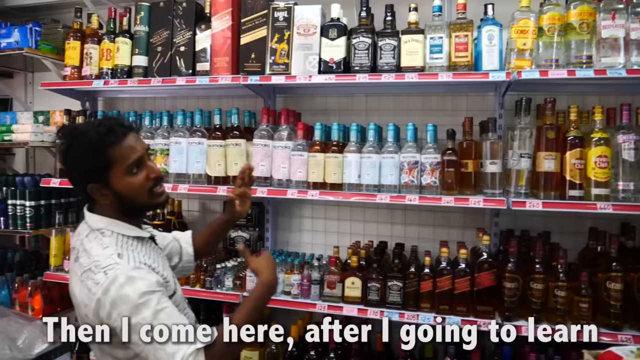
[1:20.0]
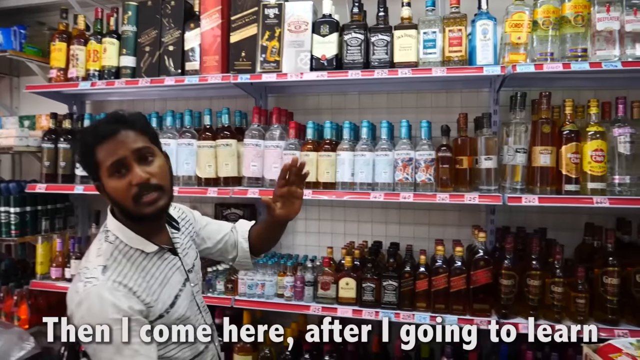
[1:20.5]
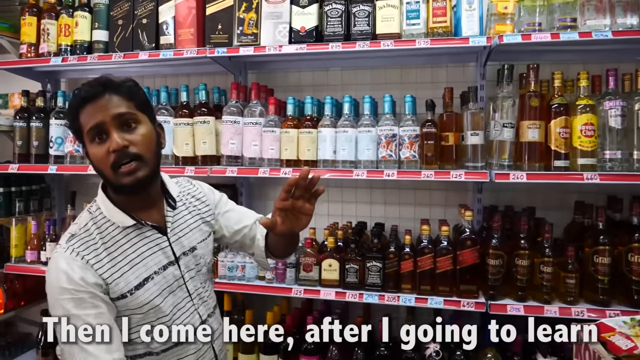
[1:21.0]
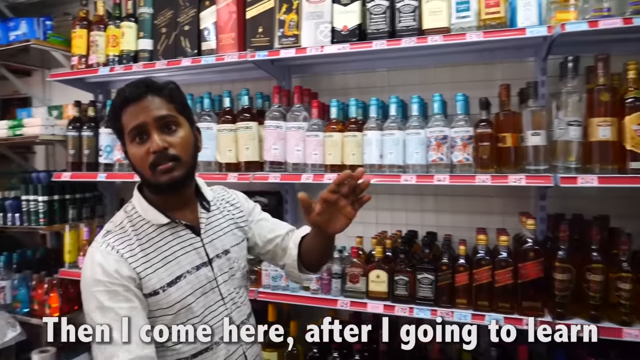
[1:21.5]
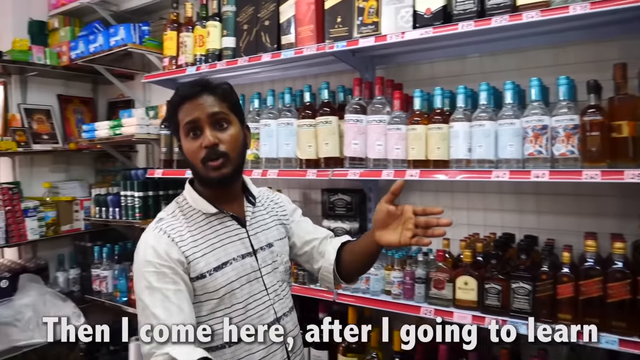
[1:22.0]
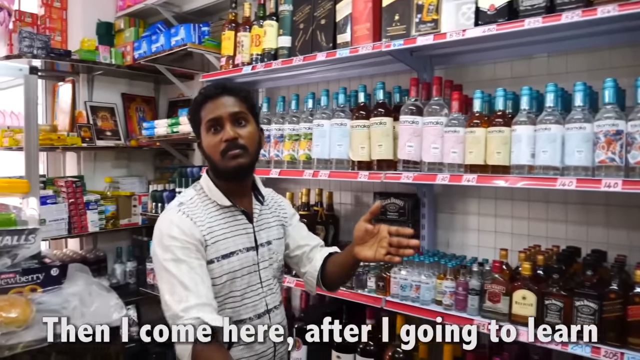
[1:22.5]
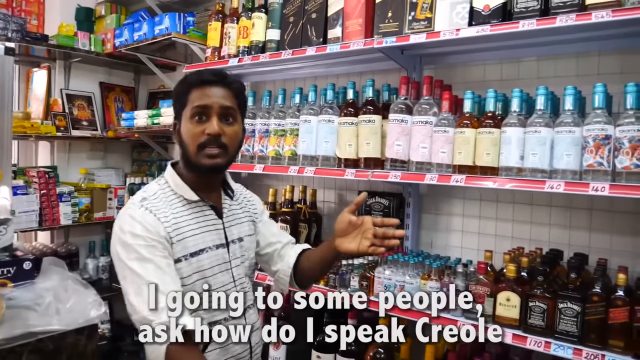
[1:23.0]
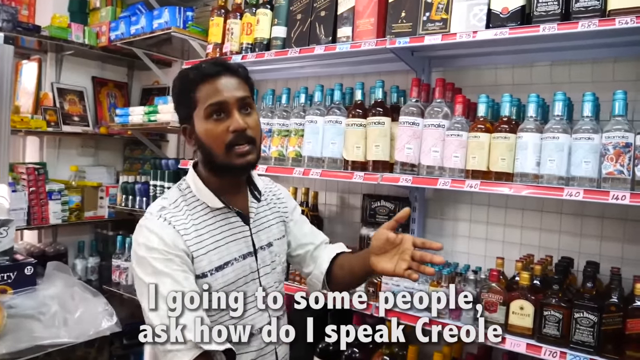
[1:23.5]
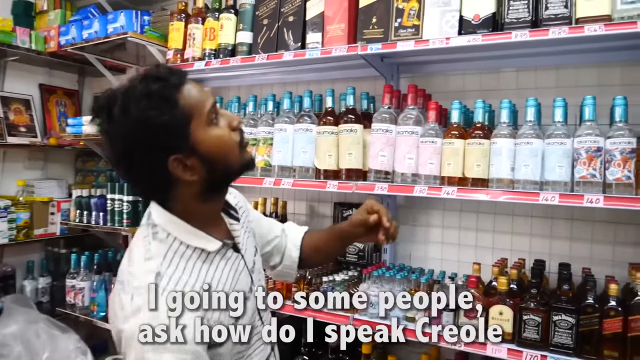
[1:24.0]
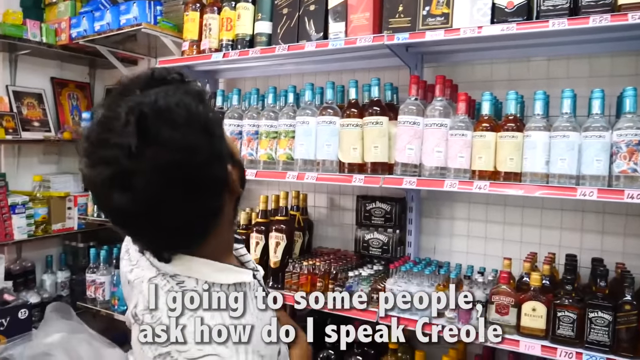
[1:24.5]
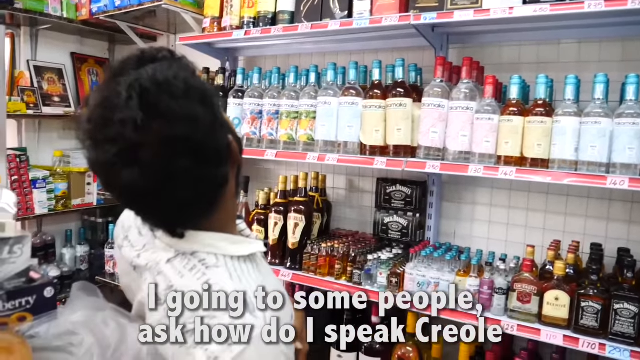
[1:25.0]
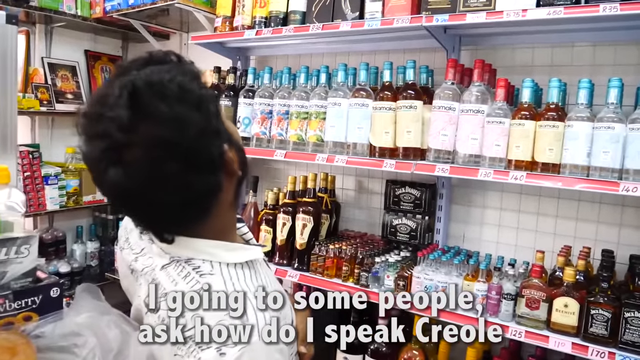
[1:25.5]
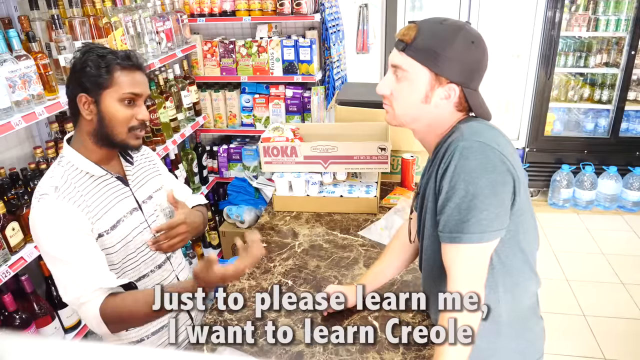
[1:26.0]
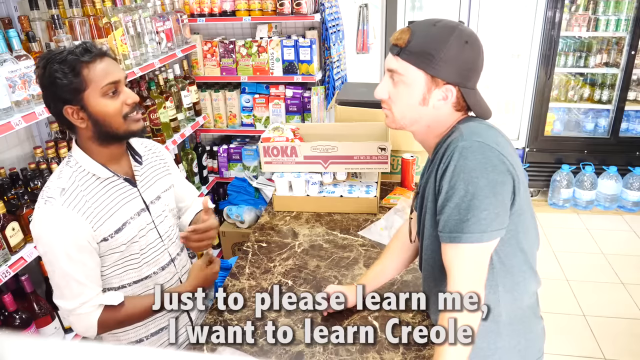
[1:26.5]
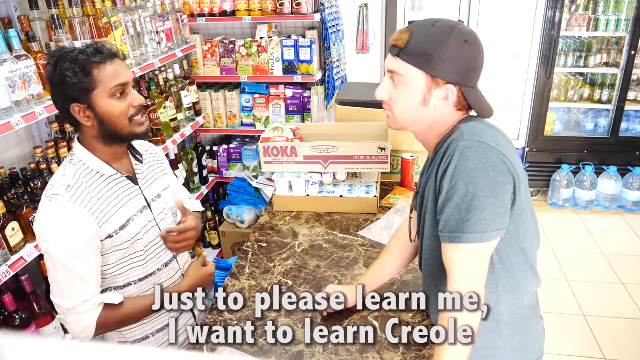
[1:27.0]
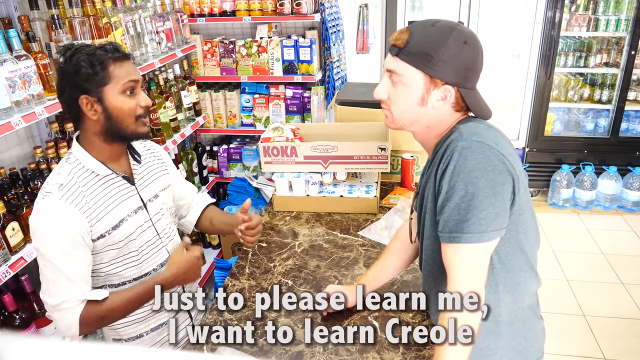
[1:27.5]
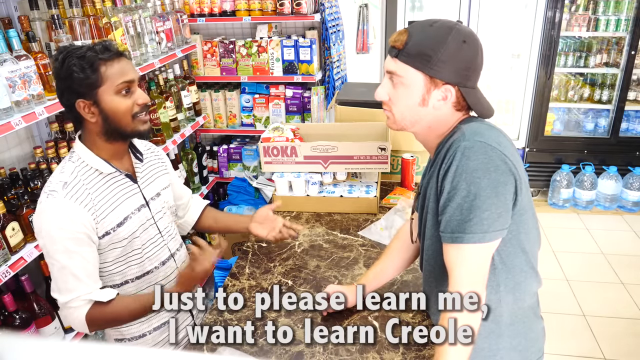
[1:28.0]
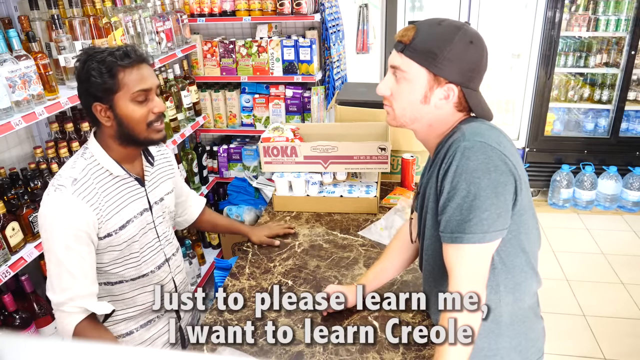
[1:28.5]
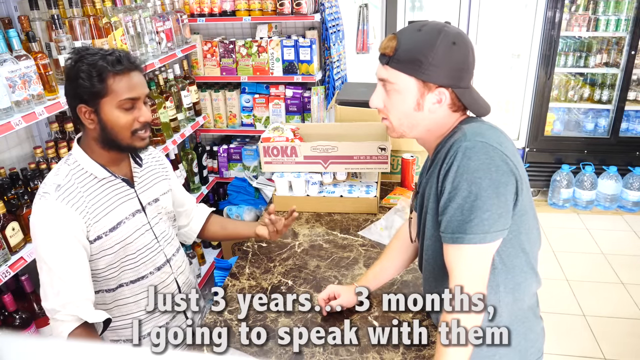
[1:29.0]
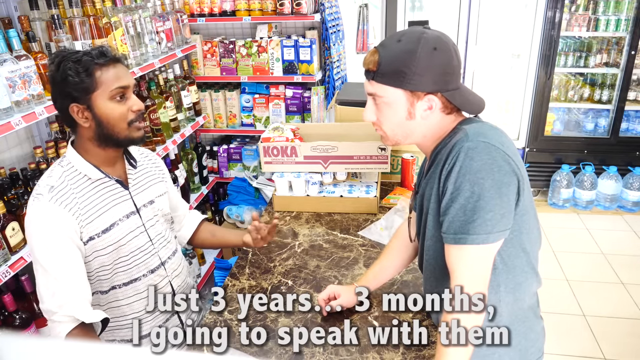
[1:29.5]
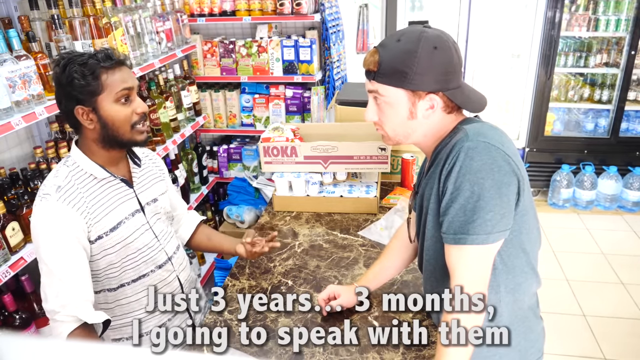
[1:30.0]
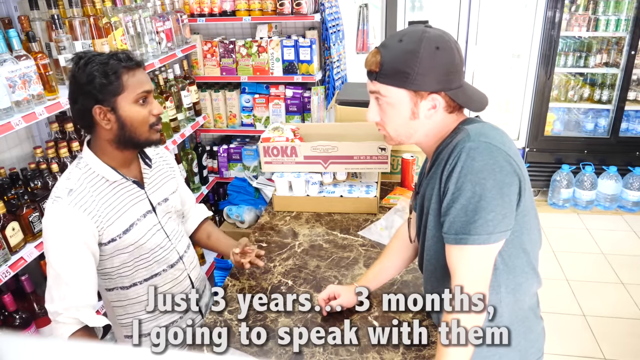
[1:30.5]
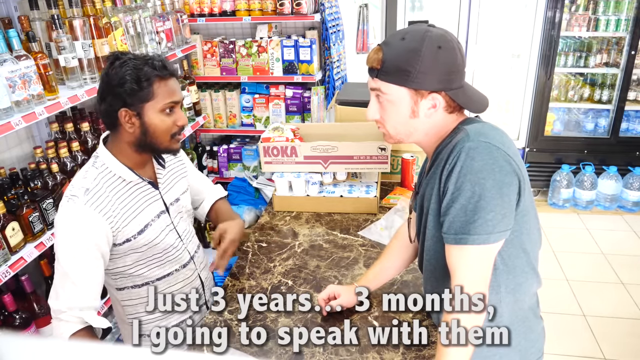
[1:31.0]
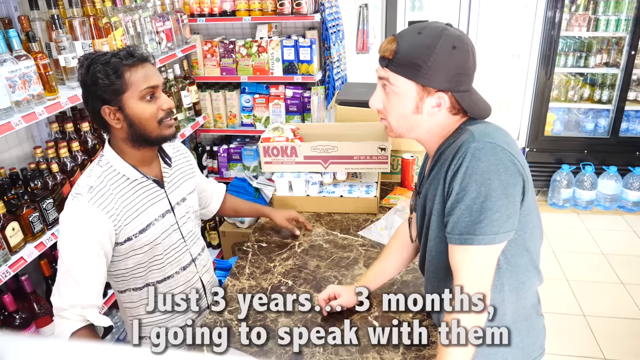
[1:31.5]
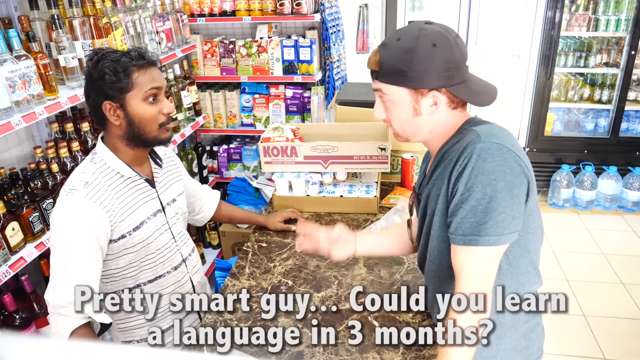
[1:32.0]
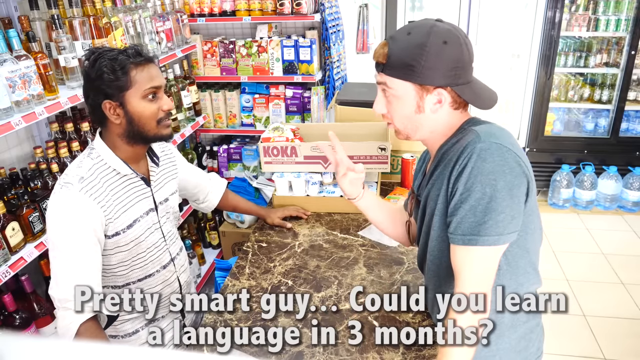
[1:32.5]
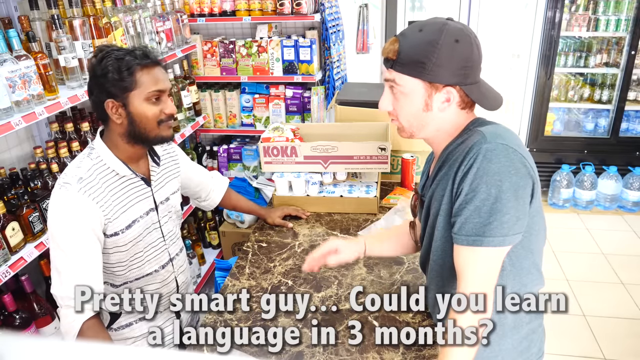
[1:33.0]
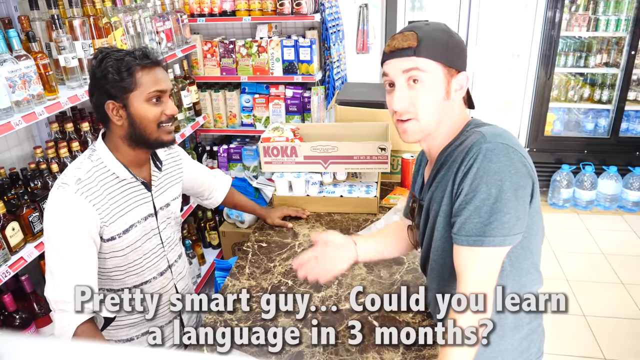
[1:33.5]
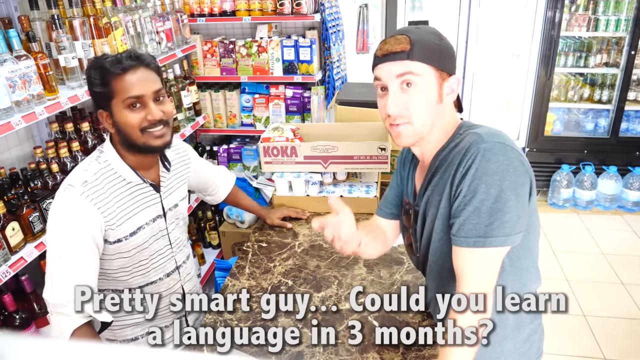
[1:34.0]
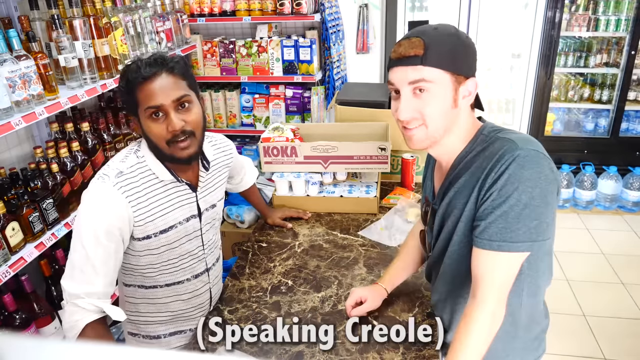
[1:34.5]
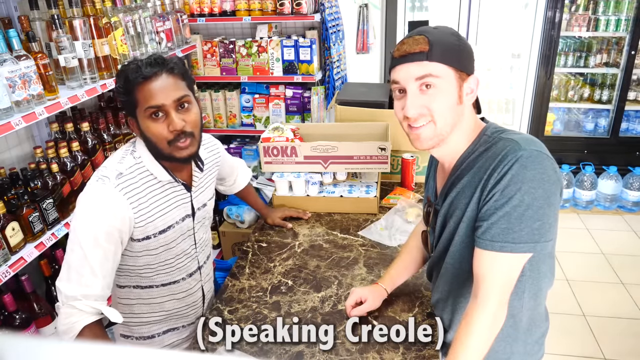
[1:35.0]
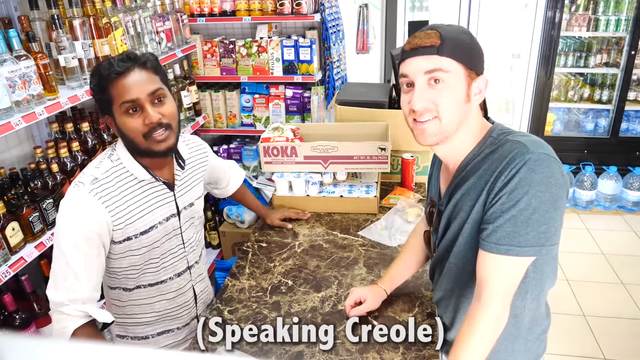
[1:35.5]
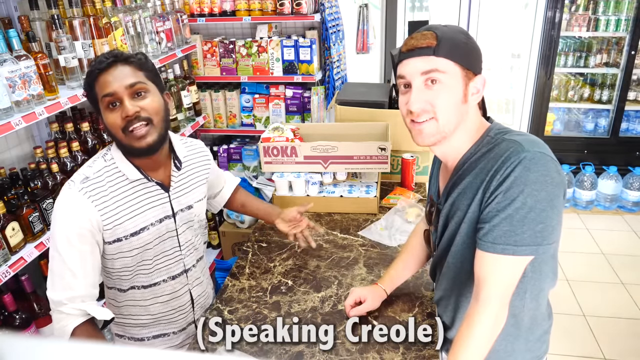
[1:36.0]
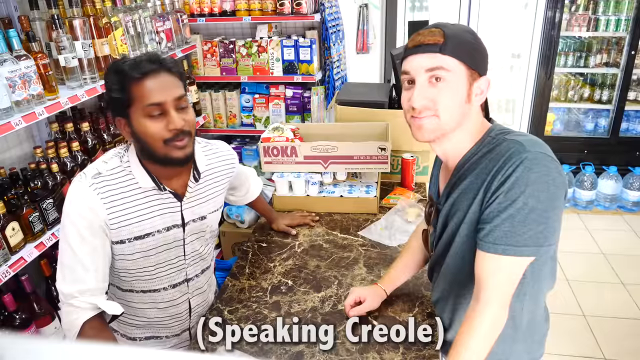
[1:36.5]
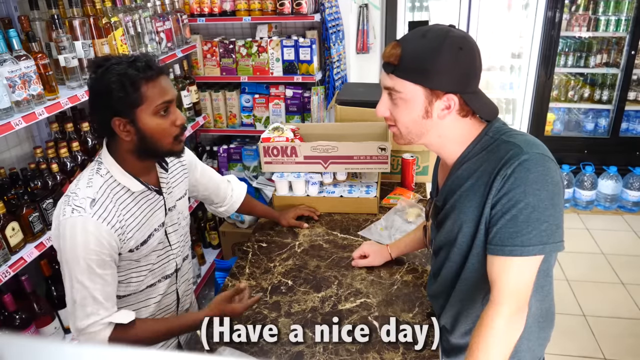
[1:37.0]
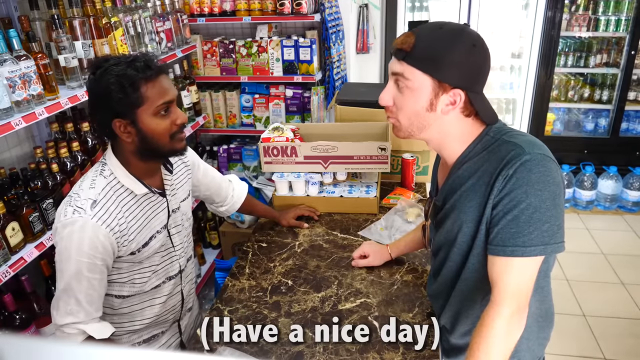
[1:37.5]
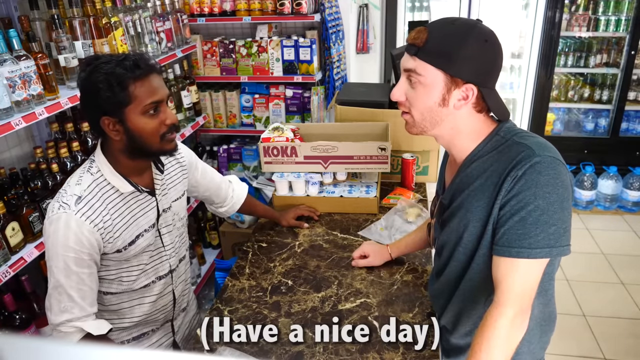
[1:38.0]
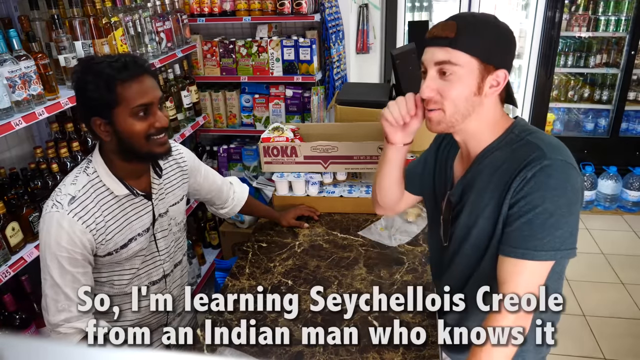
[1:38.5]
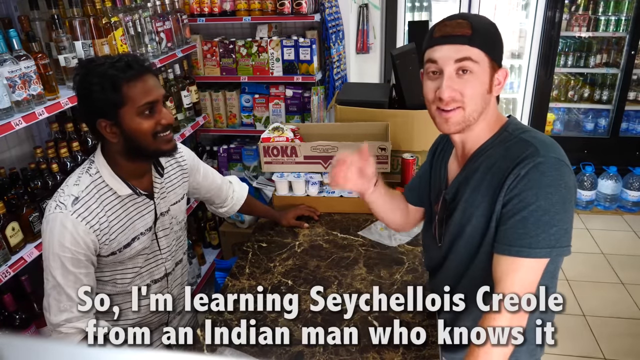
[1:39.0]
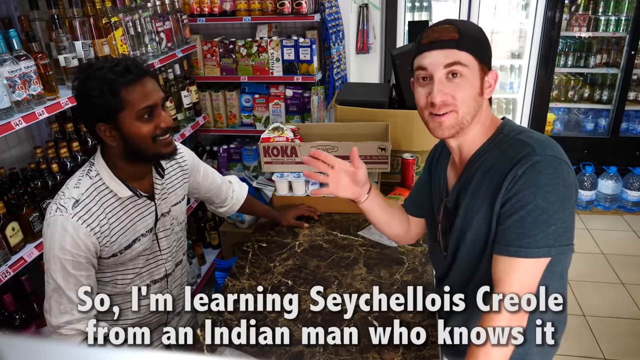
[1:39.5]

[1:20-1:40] The Indian man seems to be explaining something on the shelves to the white man, showing him the shelves of alcohol he is selling. He talks about learning the Creole language and says he will learn it in three years and three months. The shop floor has cream-white tiles. On the other side is a black fridge with a glass front, apparently holding beers, and at the bottom are big transparent bottles of water with light blue caps.